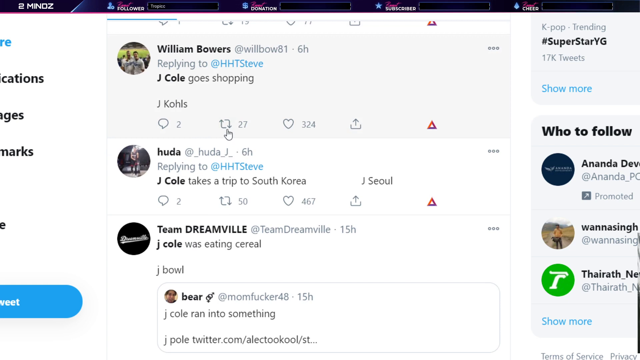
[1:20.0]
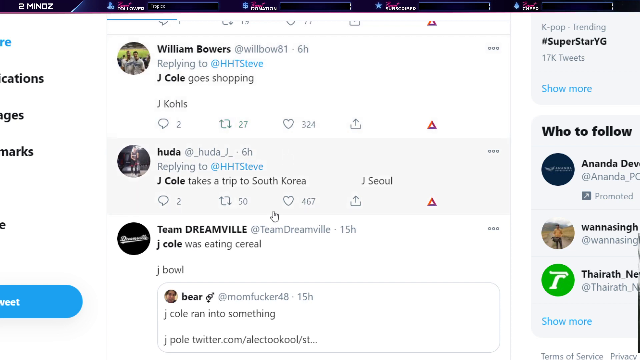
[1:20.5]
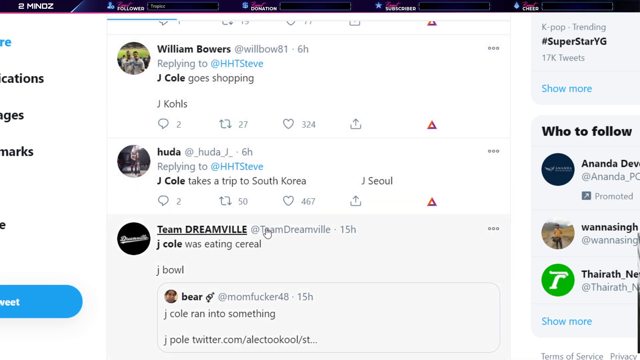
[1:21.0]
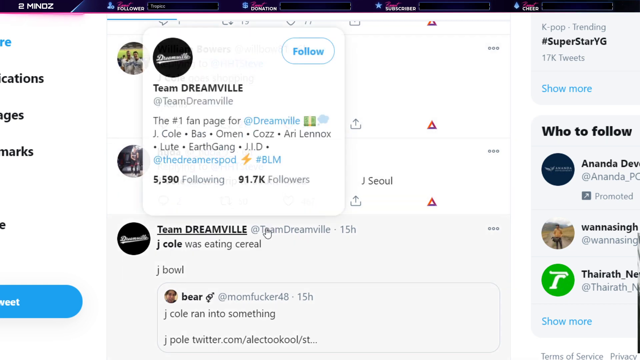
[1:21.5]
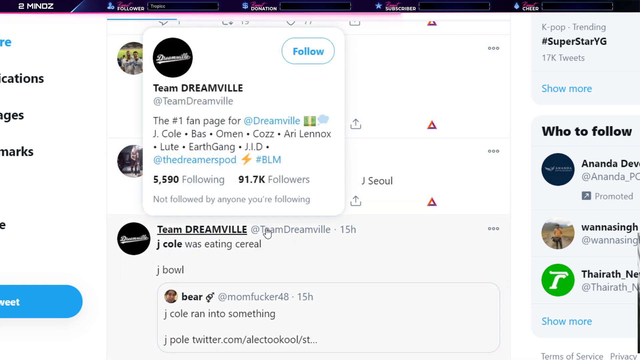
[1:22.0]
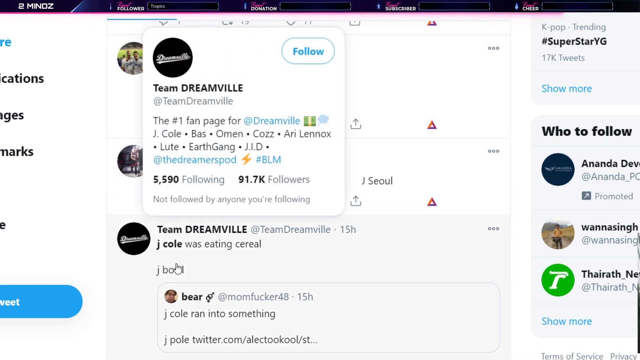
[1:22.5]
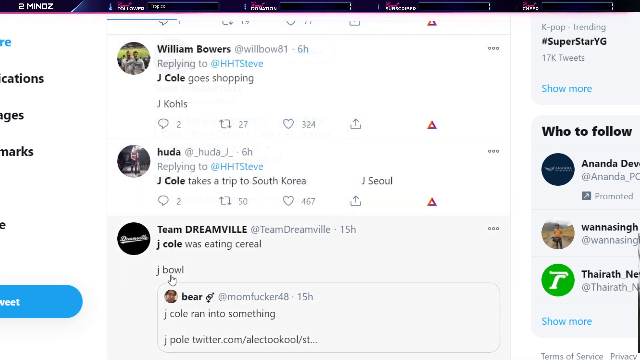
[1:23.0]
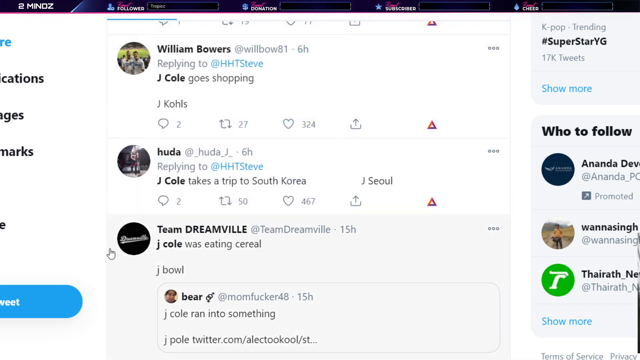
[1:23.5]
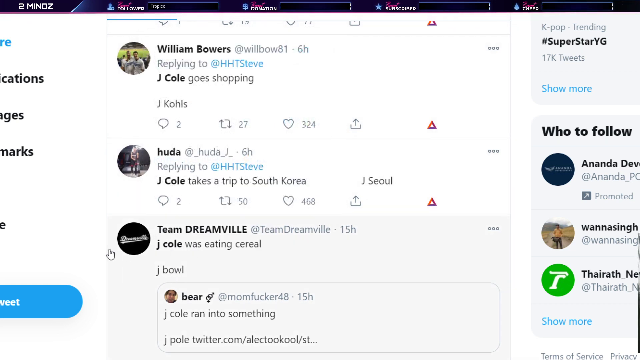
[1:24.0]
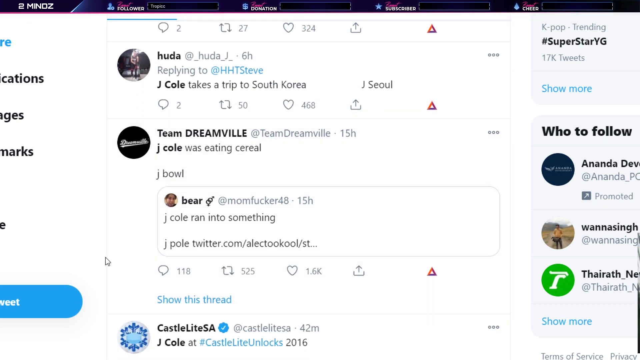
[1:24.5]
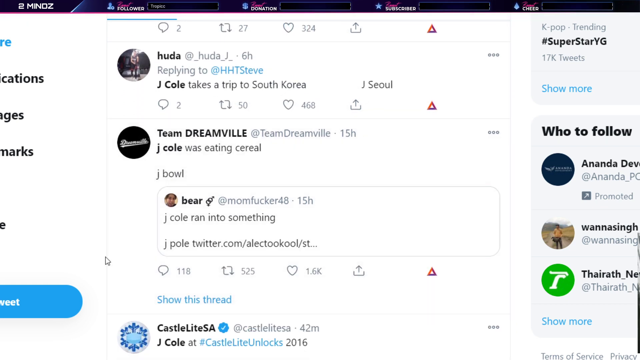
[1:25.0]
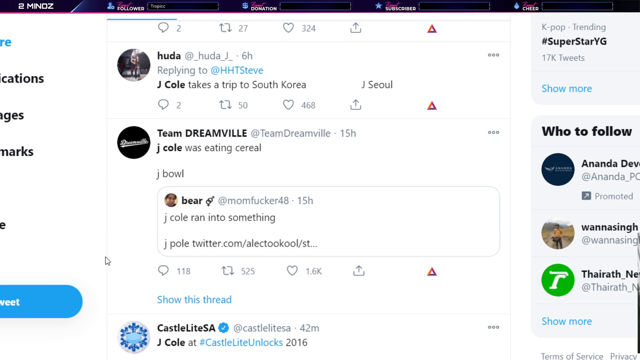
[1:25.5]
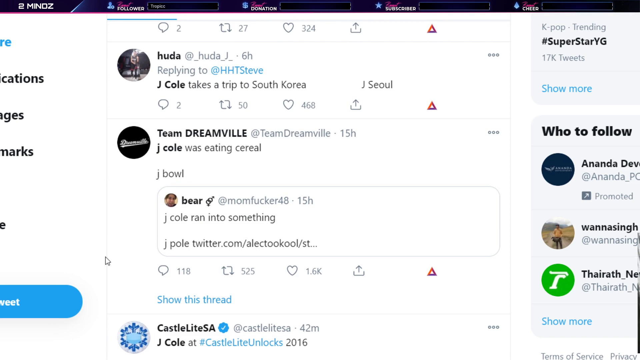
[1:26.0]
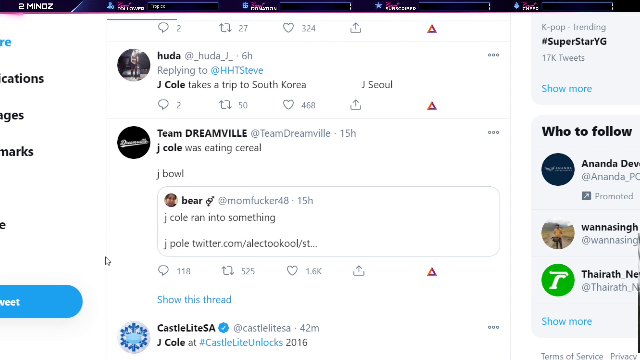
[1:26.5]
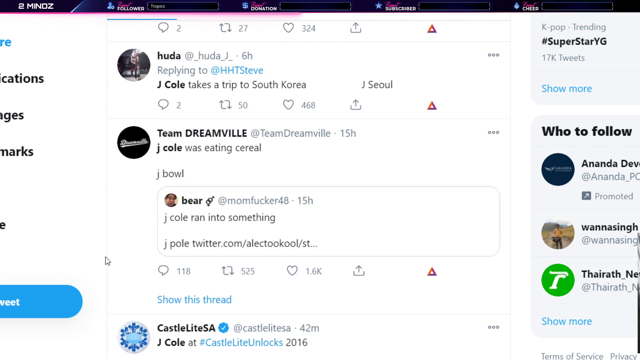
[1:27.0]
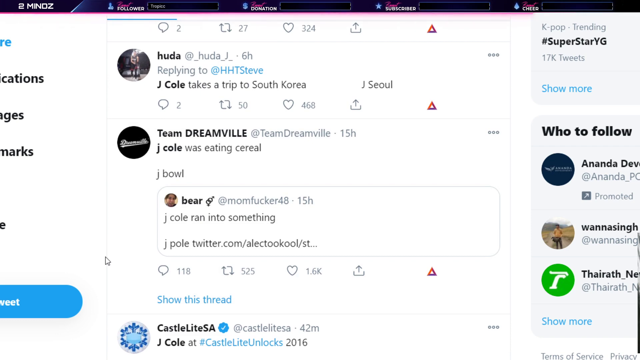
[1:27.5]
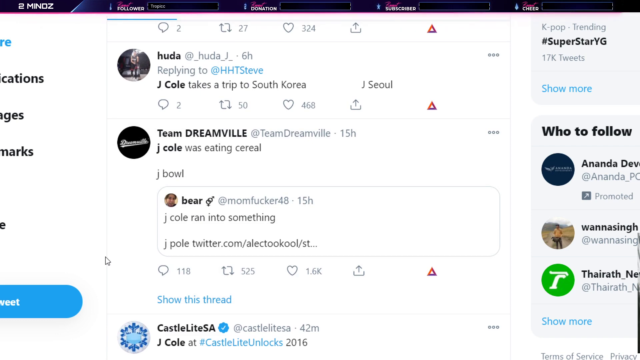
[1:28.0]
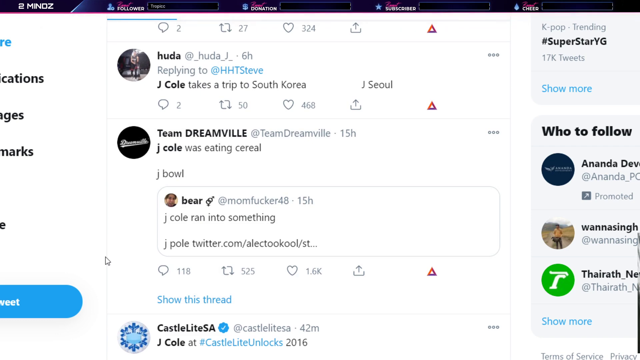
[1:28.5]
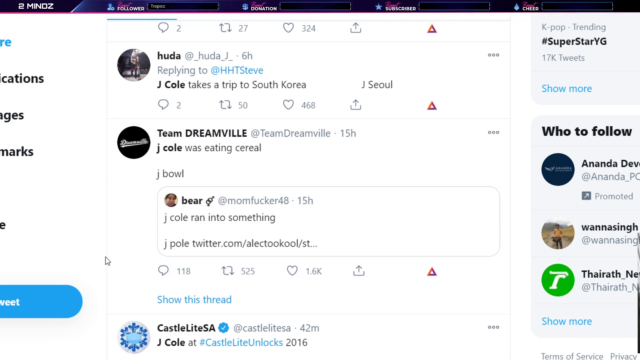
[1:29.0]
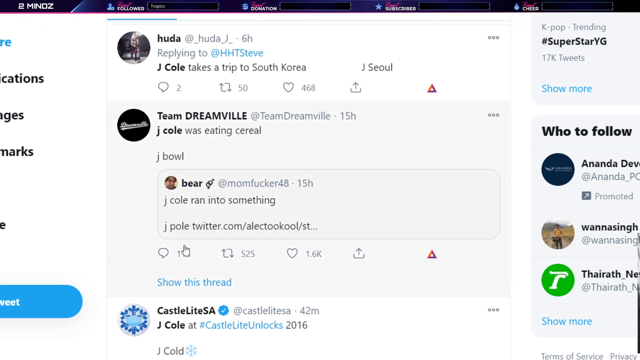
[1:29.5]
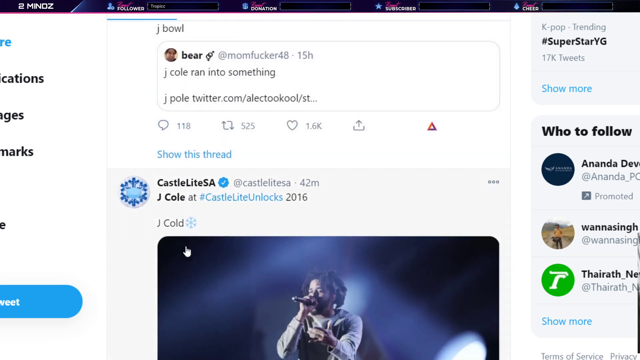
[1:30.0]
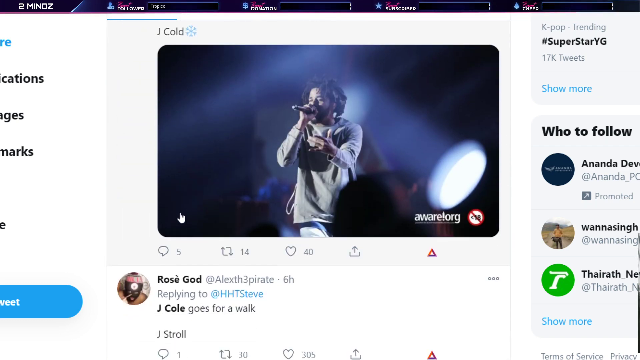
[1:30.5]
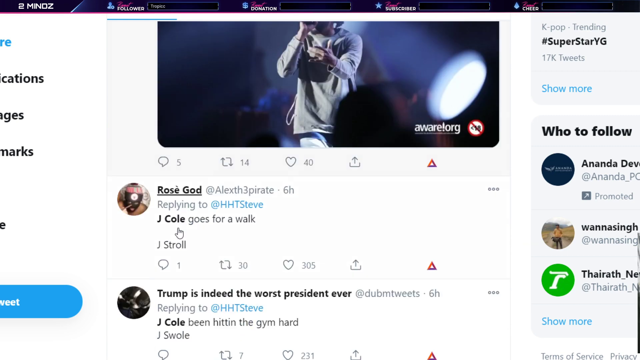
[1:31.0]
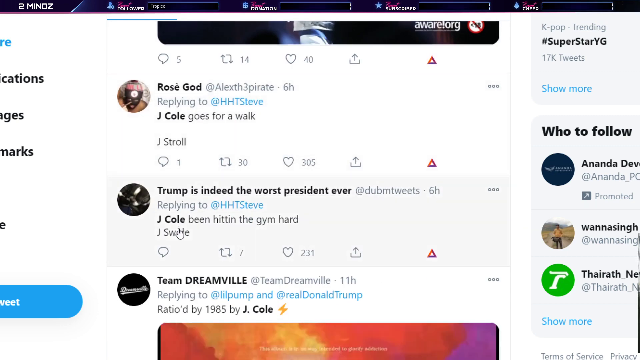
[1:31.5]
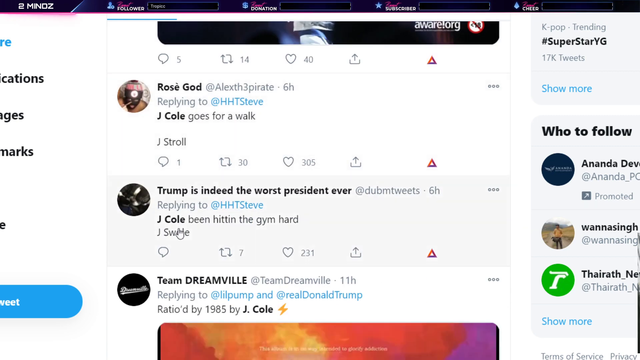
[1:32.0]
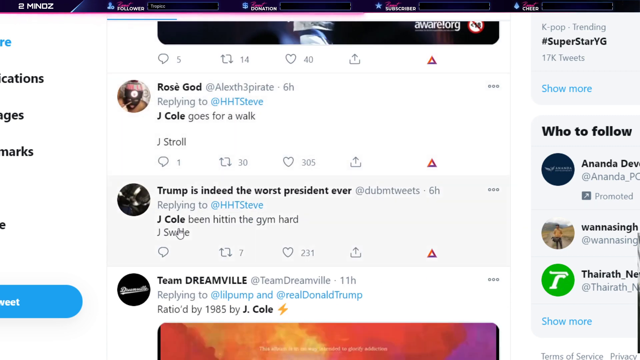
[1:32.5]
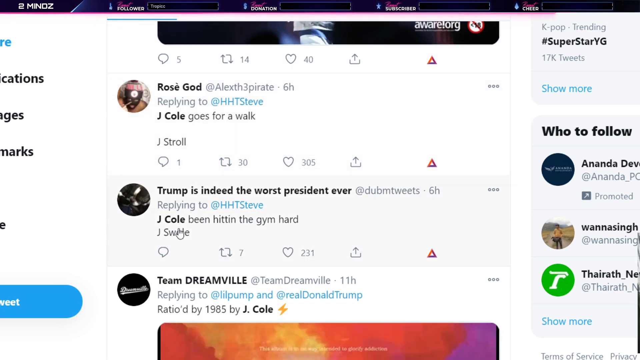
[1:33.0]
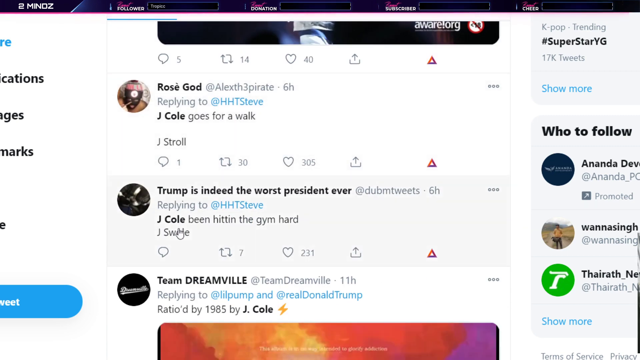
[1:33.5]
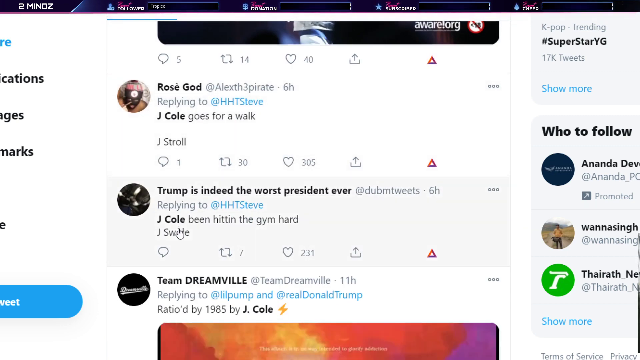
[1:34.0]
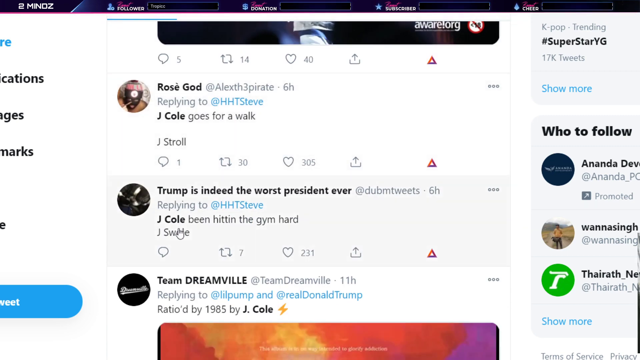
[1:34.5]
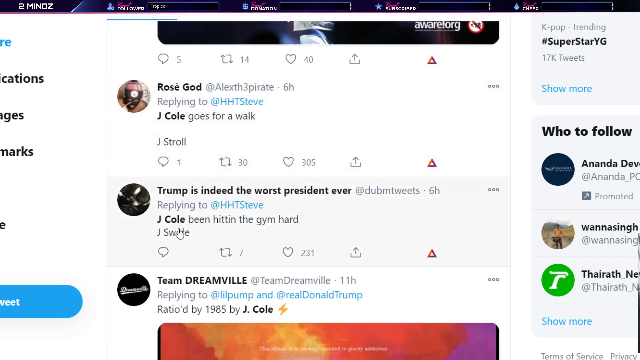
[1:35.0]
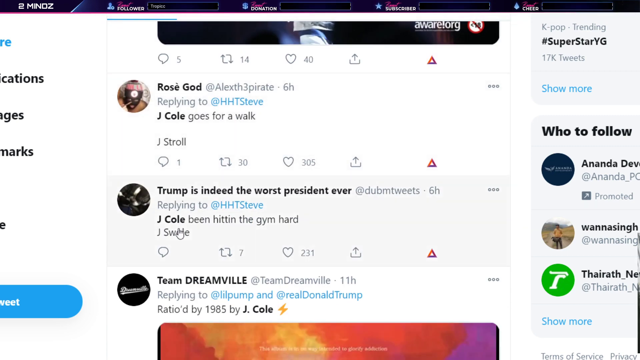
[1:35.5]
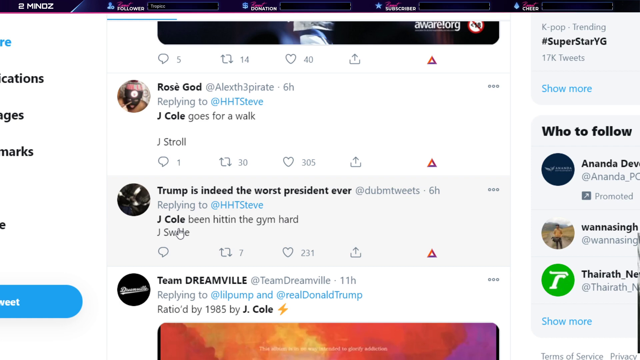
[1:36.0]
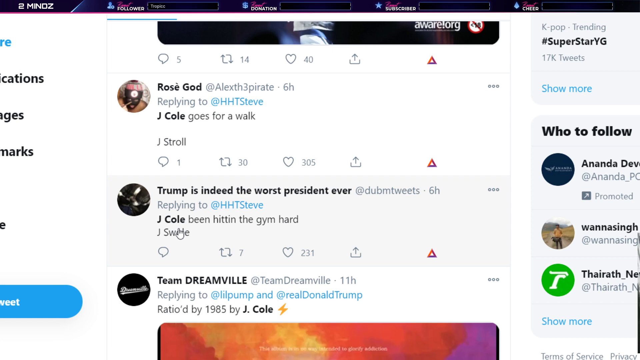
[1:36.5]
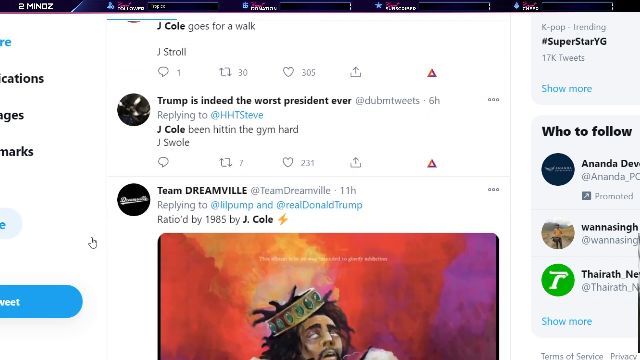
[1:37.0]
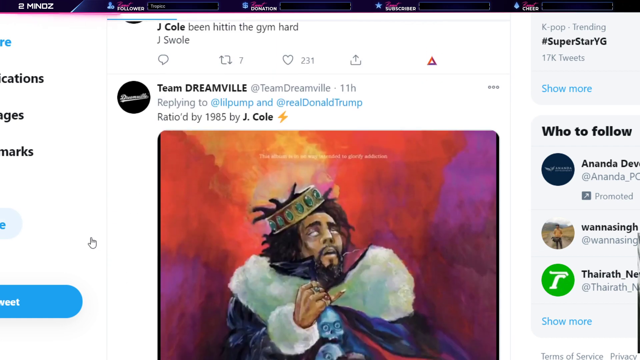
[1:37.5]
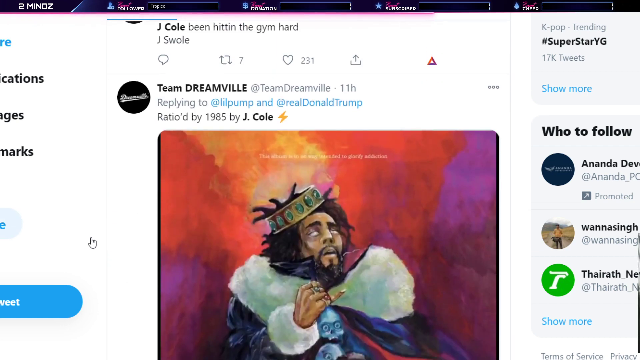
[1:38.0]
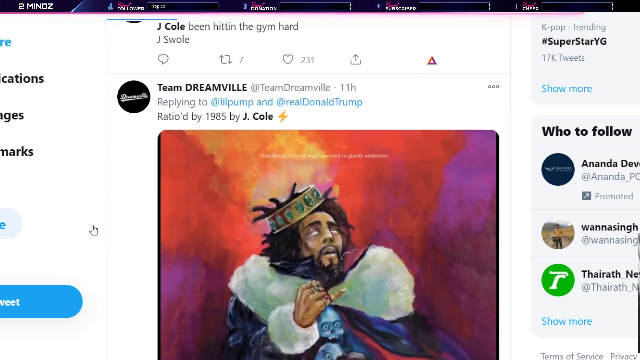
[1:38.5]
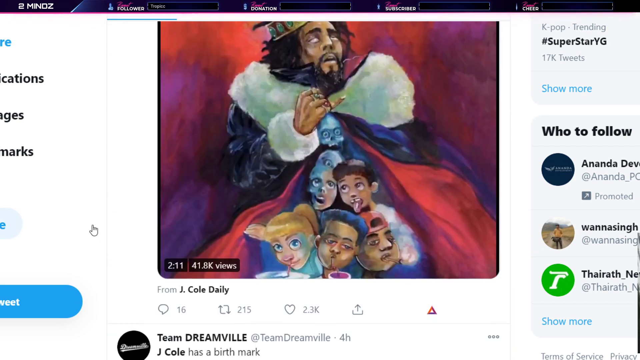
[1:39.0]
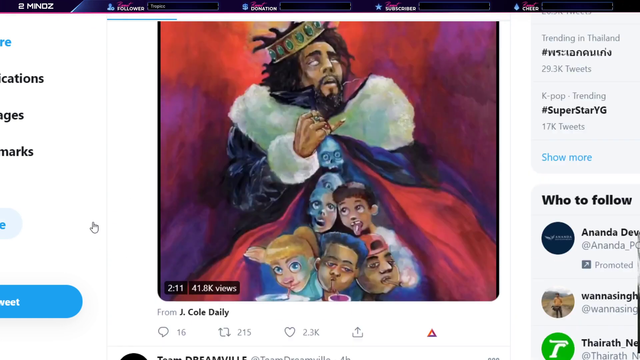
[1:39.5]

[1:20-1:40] The person clicks on a tweet from Team Dreamville posted 15 hours ago; it begins "J. Cole was eating". He scrolls down and more posts about J. Cole are visible. There is a picture of J. Cole sitting, with a logo. In another picture, J. Cole appears to be singing on a dark stage, holding a microphone and gesturing with his hands. Team Dreamville appears most often, and its tweets about J. Cole are the most visible. A painting shows J. Cole wearing a crown, with his dreads, against a pink, purple, and orange background. He appears to be wearing a coat and has several rings. On his coat are several cartoon-like creatures that also look like children, including one that looks like a ghost with round eyes.